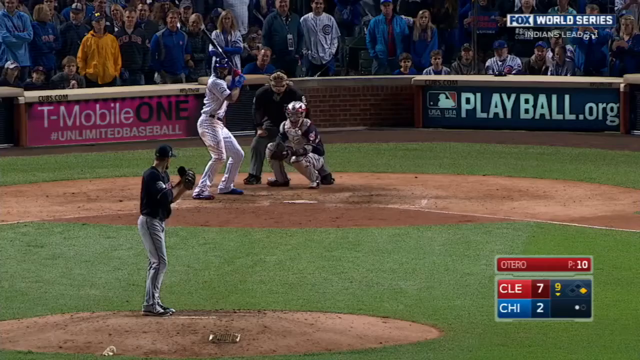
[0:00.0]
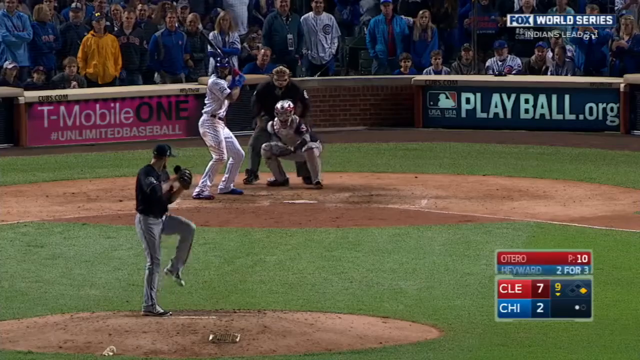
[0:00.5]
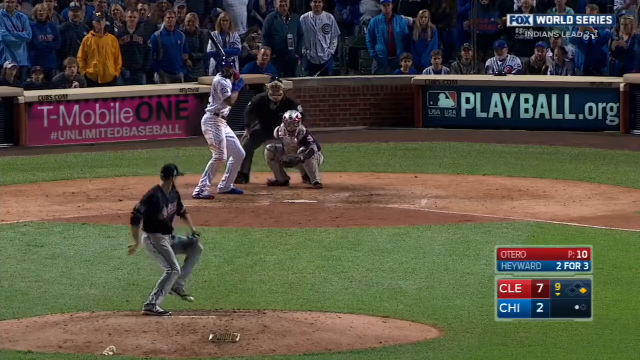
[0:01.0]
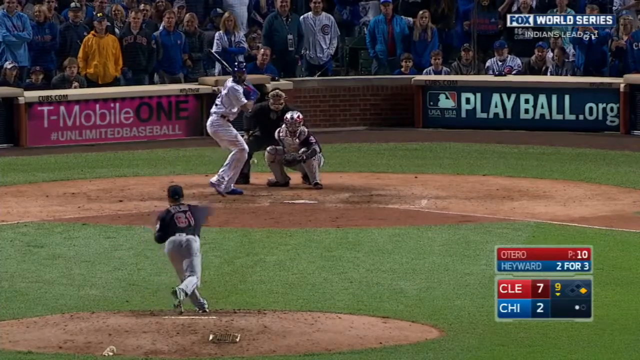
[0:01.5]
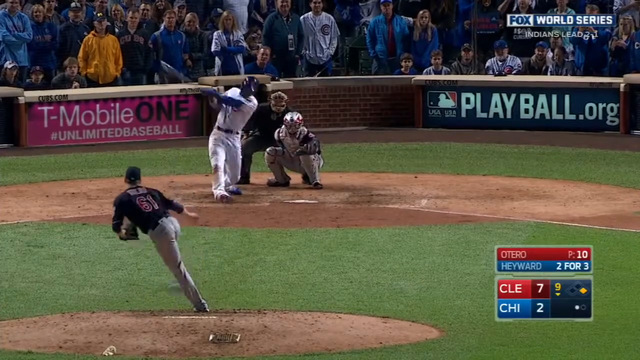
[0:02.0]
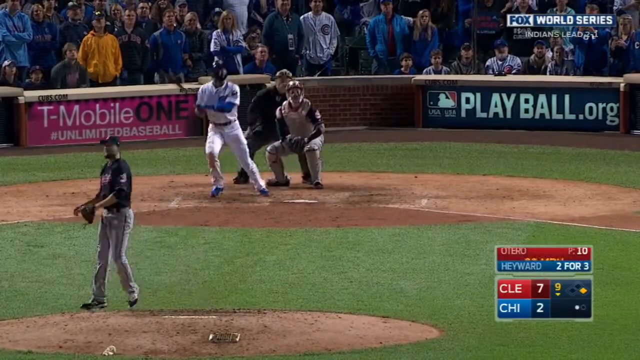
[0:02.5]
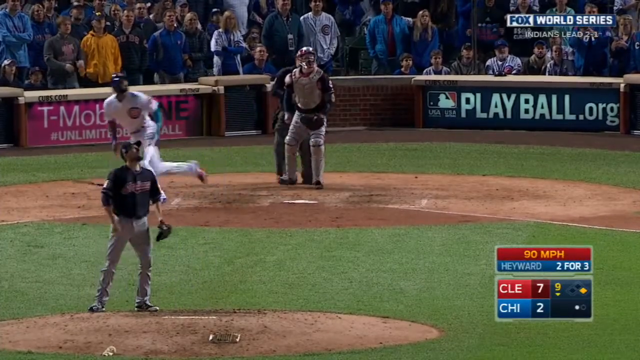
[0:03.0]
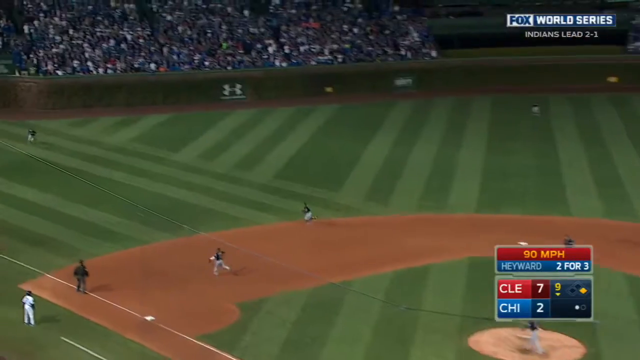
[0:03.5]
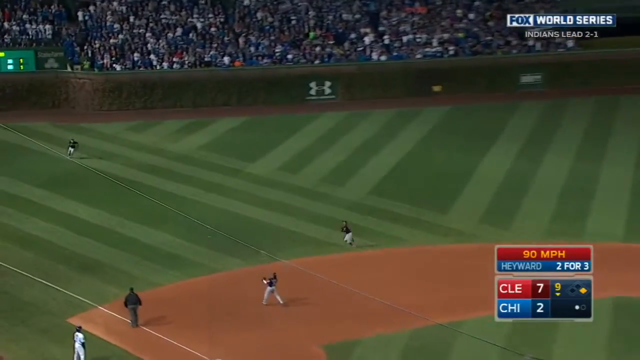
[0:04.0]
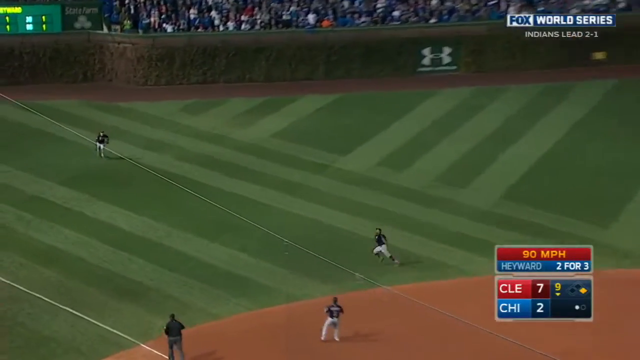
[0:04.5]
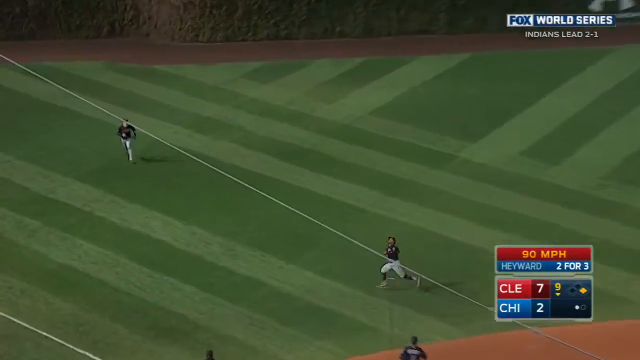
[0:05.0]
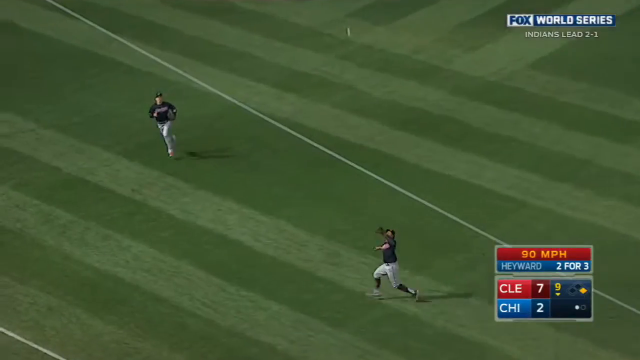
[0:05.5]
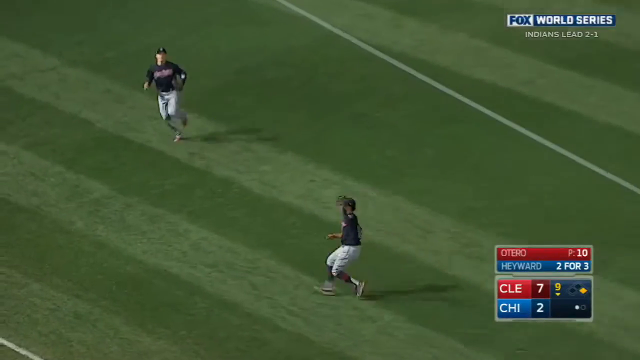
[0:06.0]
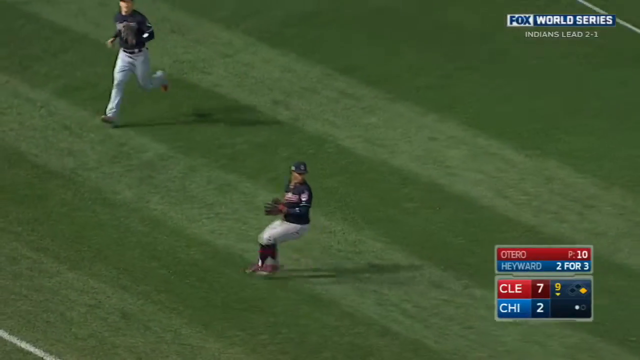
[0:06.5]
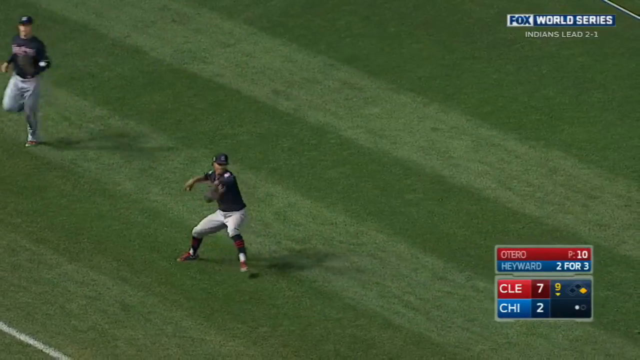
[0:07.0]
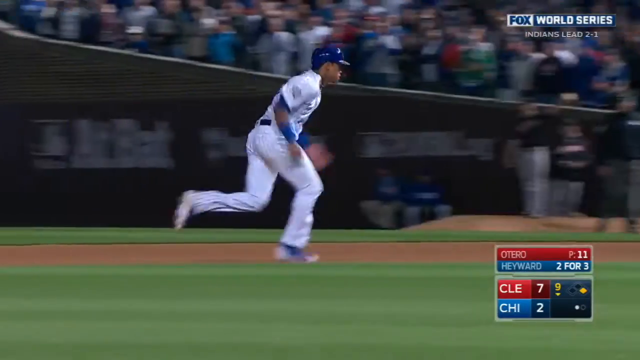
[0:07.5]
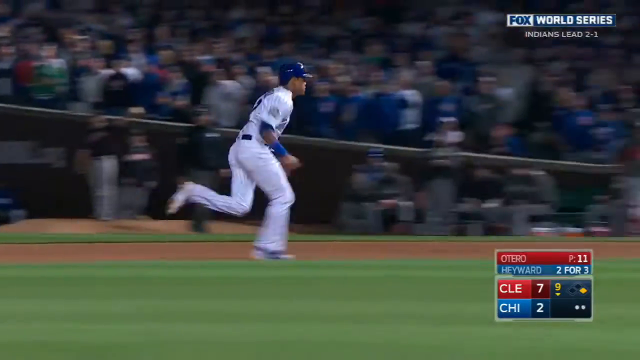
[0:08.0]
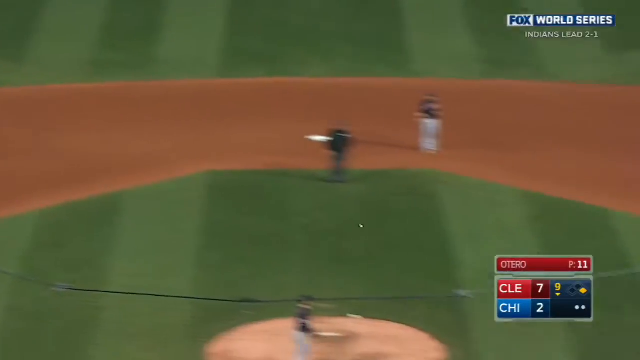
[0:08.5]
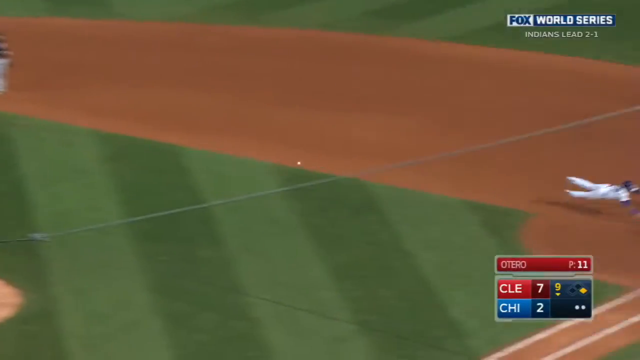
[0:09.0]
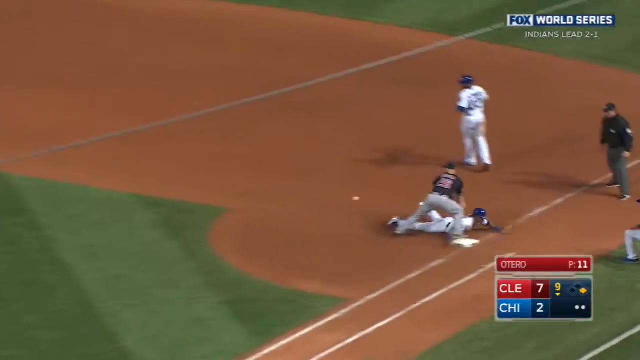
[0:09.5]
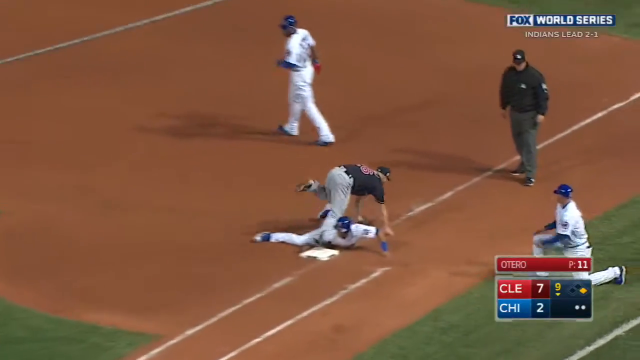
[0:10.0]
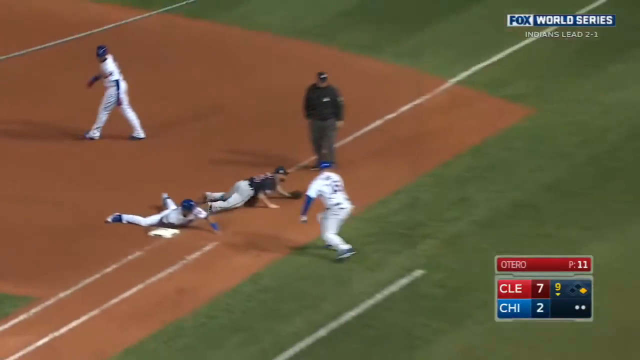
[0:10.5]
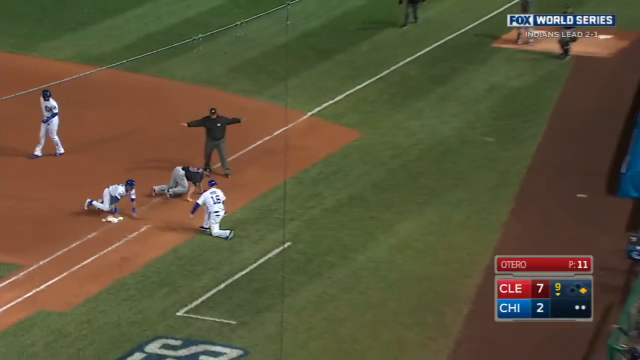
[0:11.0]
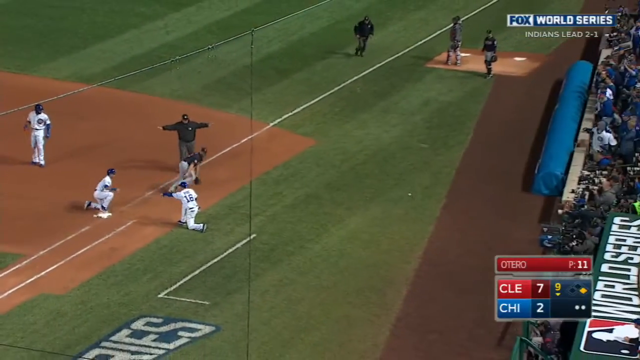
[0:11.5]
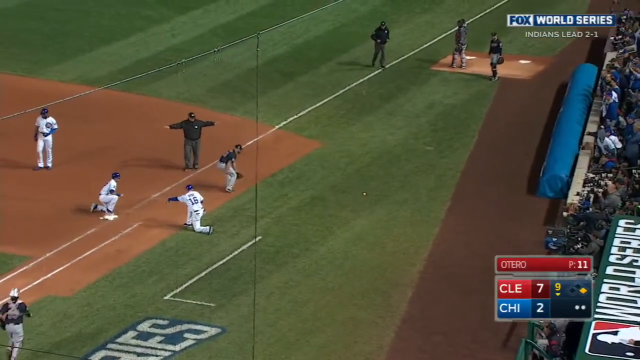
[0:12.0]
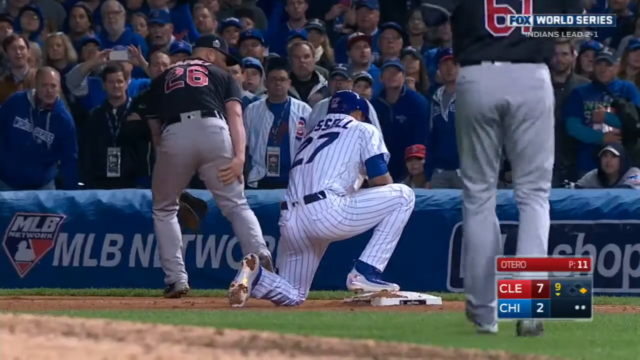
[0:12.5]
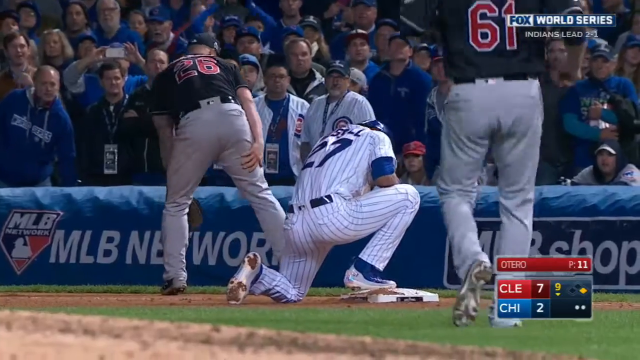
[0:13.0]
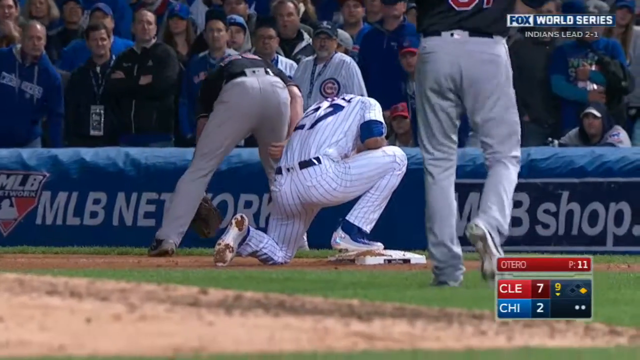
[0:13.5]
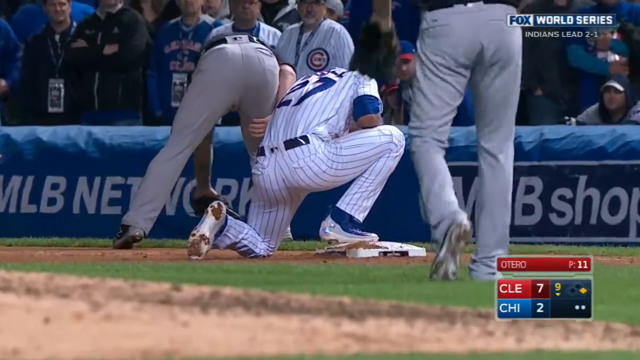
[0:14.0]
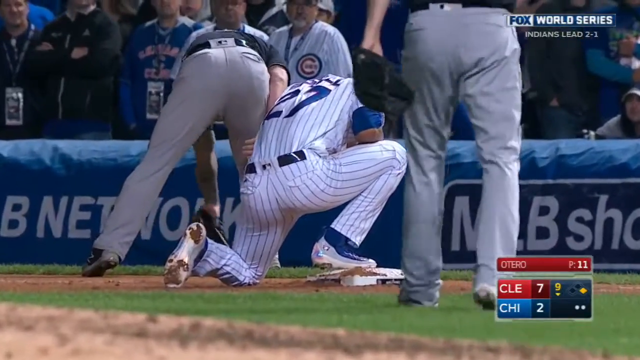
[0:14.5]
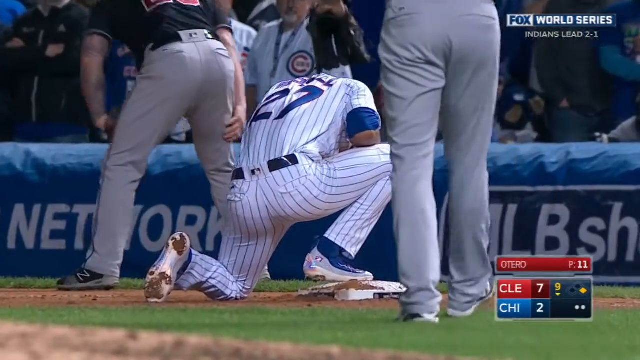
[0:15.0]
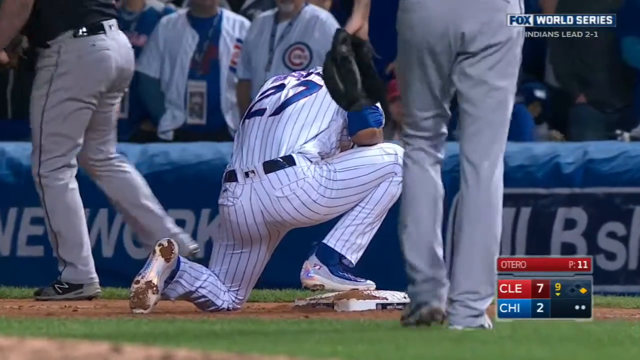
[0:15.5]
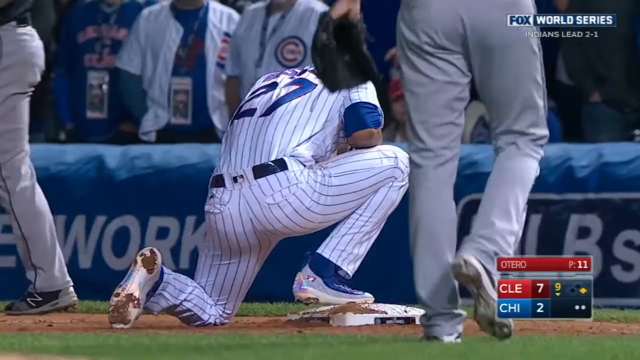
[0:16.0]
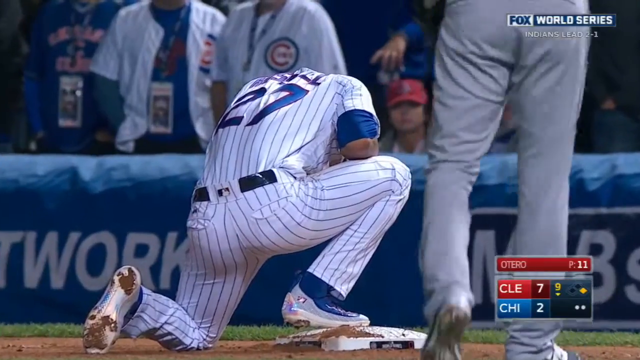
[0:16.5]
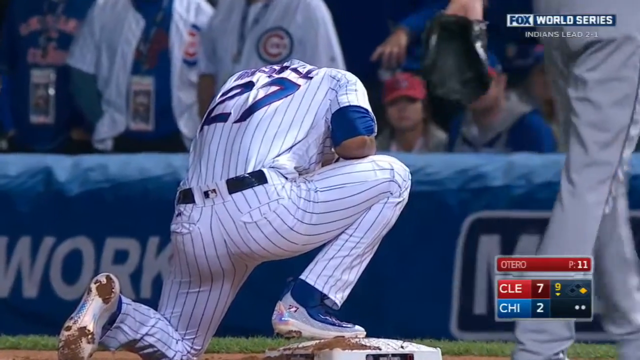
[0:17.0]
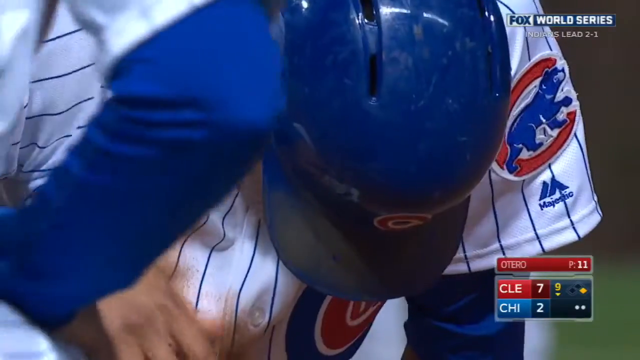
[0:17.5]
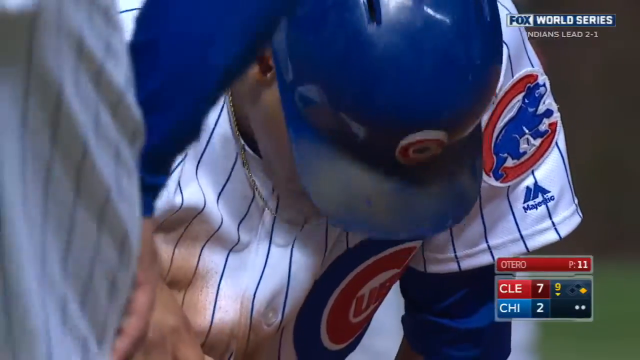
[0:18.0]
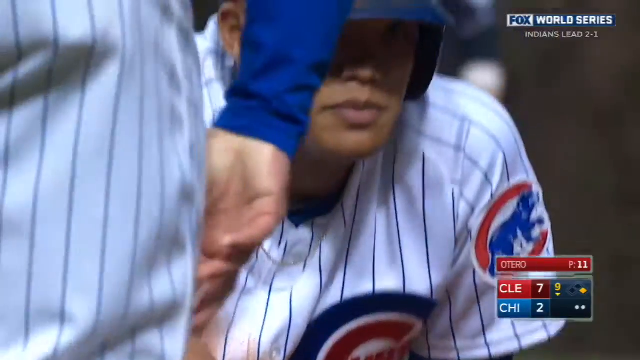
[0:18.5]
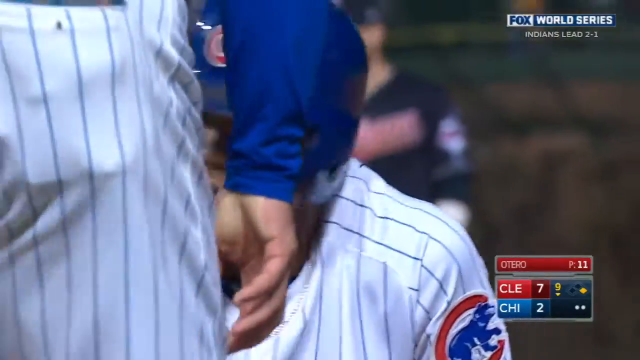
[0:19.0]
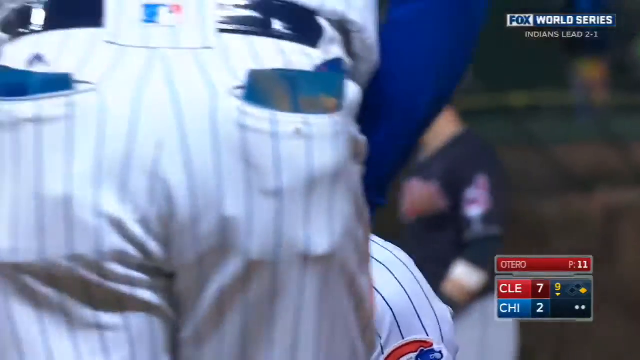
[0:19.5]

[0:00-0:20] A baseball match is underway: one athlete throws the ball toward the player holding the bat, and the person behind him tries to catch the ball. Sponsors of the stadium or match, such as T-Mobile and Playbill.org, are visible, and people in the background are watching the match. When the man with the bat hits the ball, the view switches to a zoomed-out version of the field. Two people run toward where the ball will land in order to catch it, and two other people, probably a referee and another person, are in the background, along with tons of spectators watching. The video zooms in as one of the players catches the ball. Another person runs to one of the bases to land on it before the ball arrives. The other person could not catch it, and the video zooms in on the person who landed on the base, continuing to zoom in on their face, which shows some disappointment.